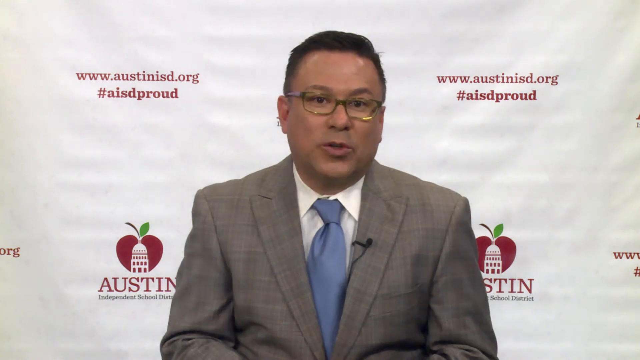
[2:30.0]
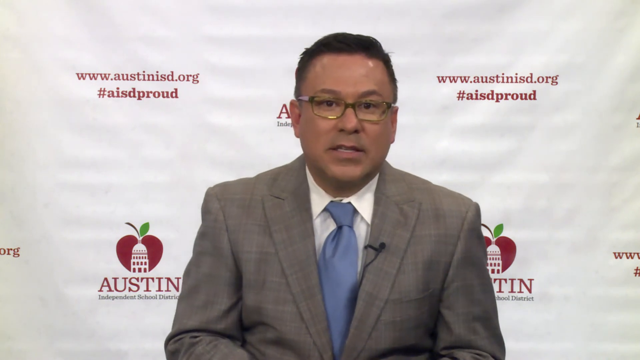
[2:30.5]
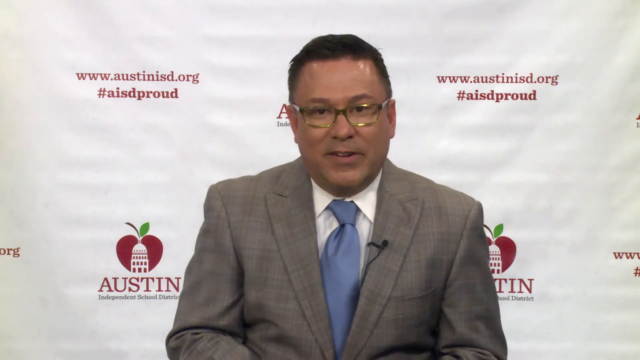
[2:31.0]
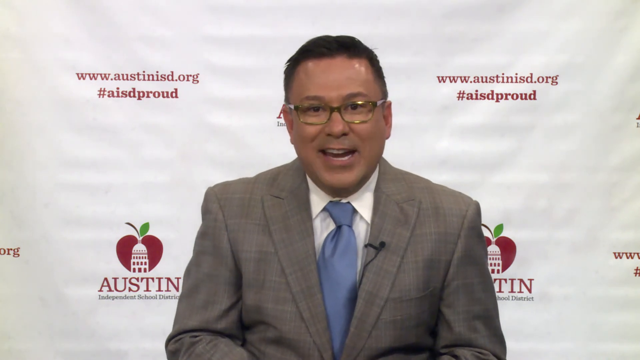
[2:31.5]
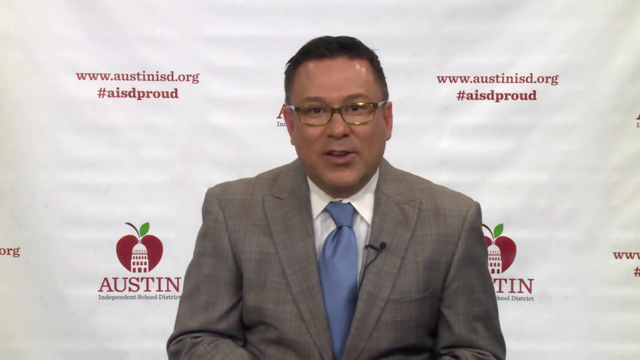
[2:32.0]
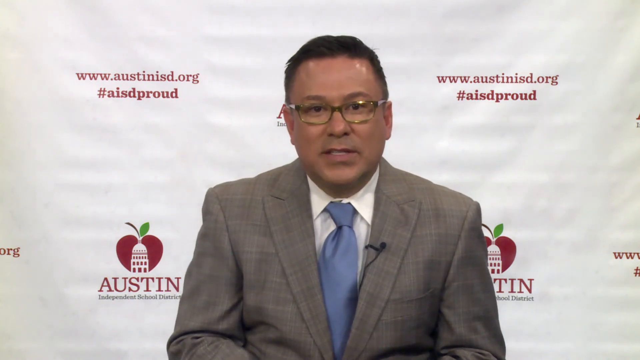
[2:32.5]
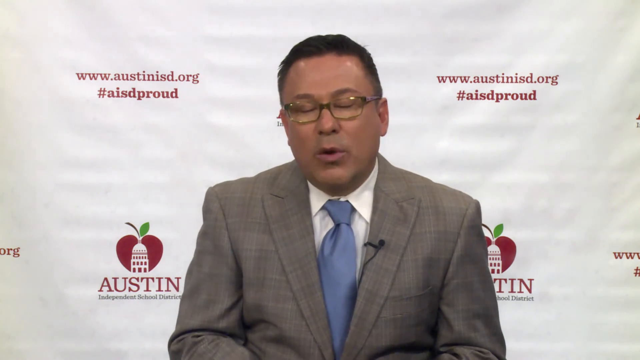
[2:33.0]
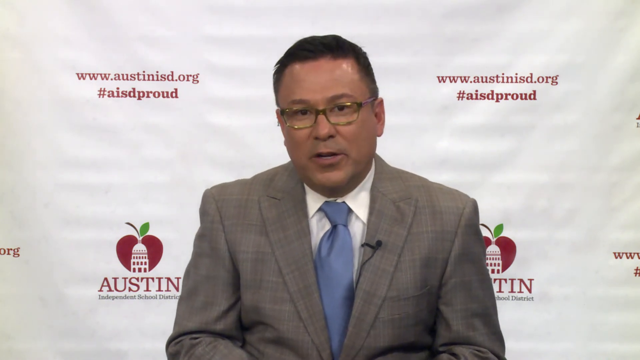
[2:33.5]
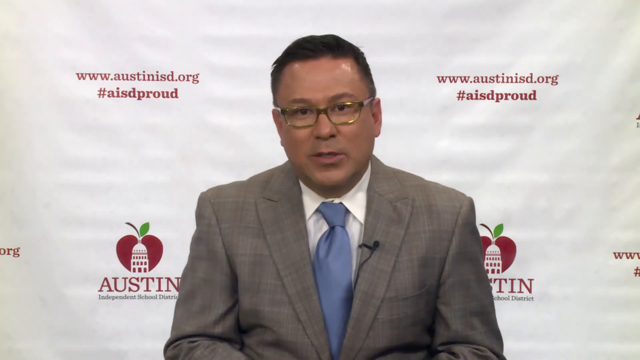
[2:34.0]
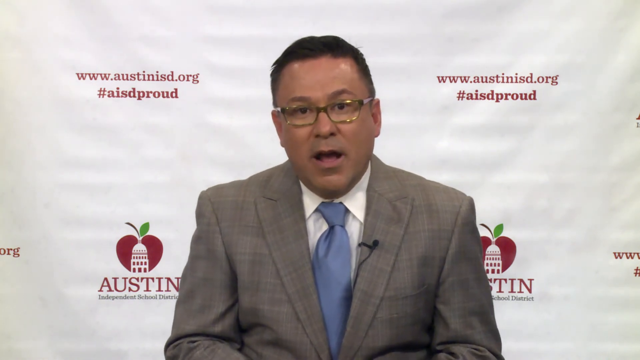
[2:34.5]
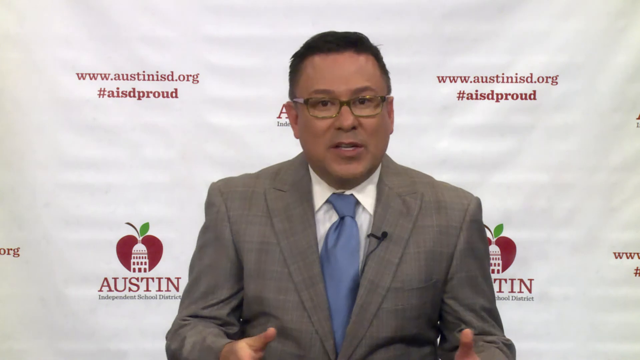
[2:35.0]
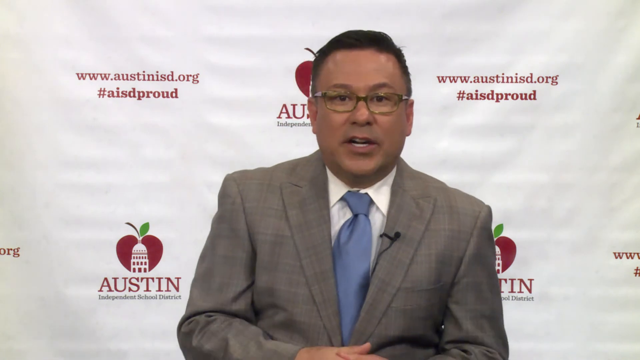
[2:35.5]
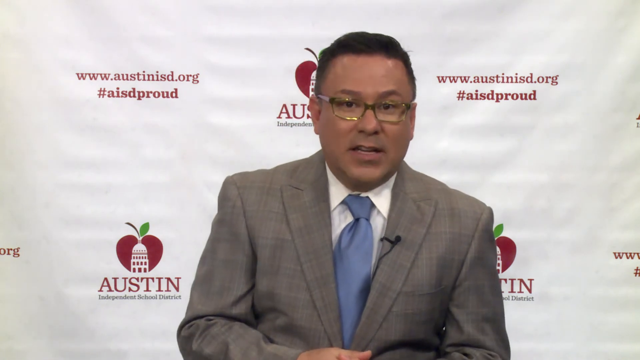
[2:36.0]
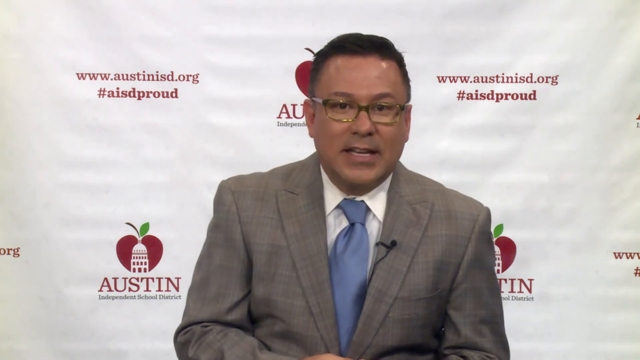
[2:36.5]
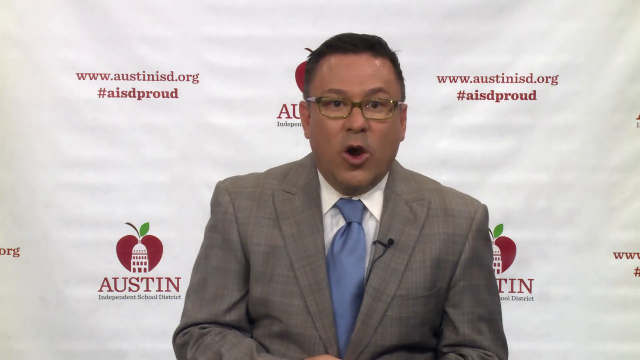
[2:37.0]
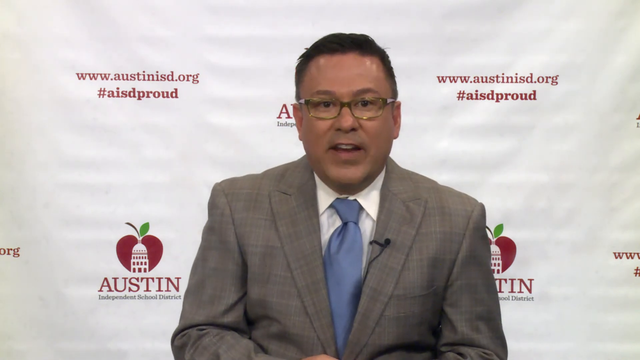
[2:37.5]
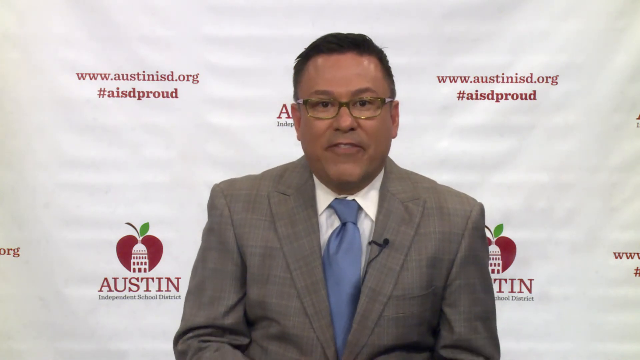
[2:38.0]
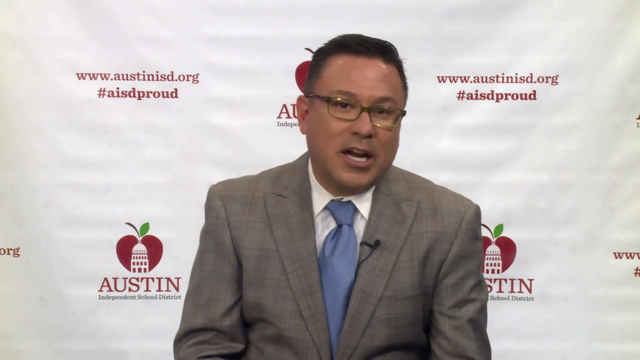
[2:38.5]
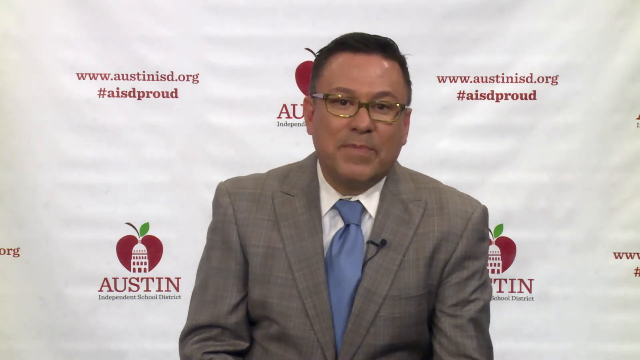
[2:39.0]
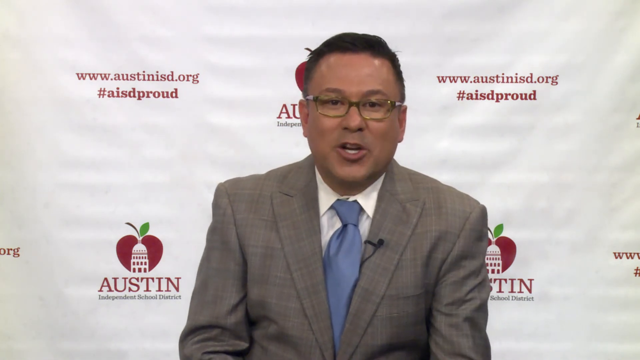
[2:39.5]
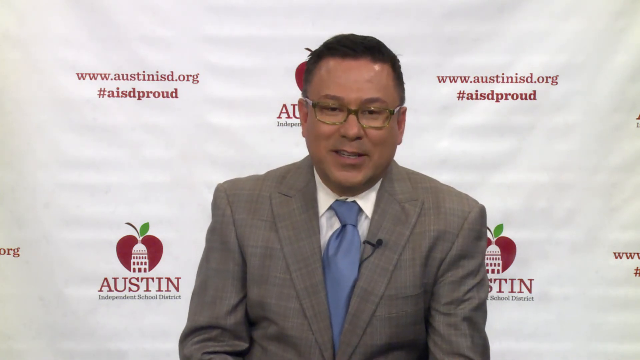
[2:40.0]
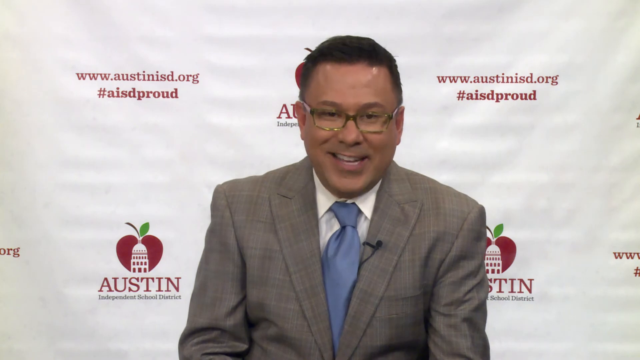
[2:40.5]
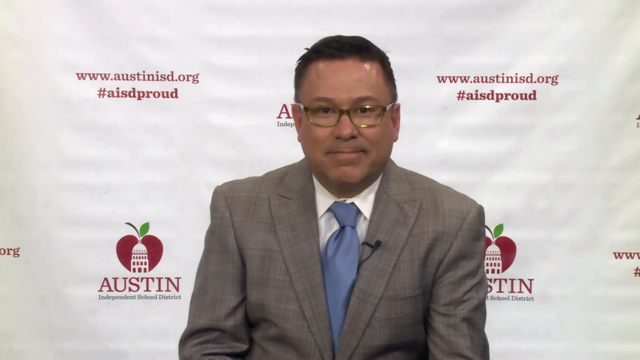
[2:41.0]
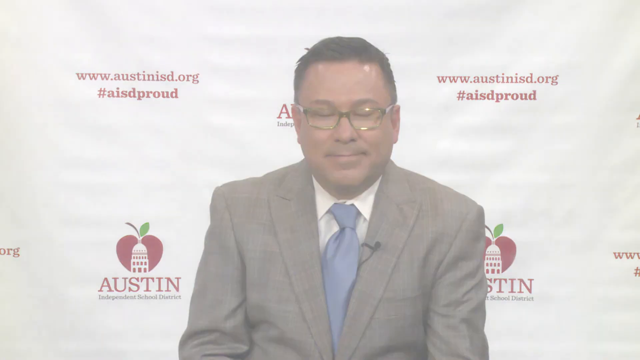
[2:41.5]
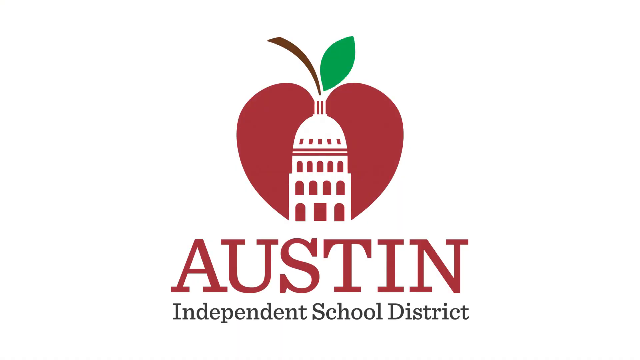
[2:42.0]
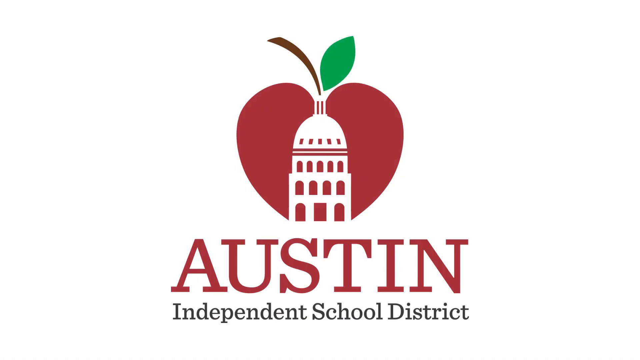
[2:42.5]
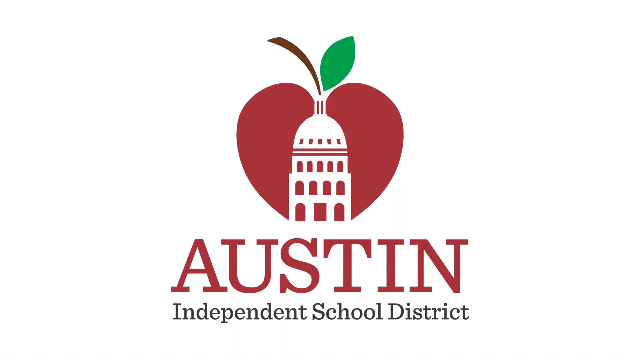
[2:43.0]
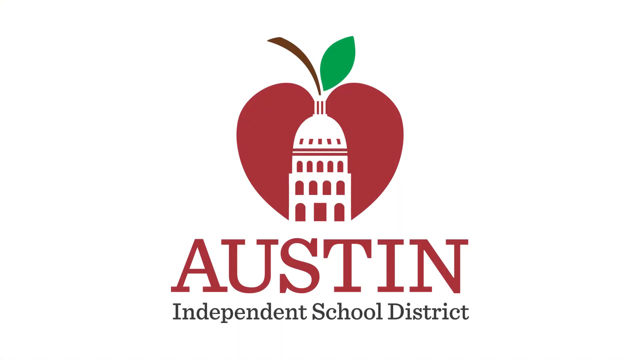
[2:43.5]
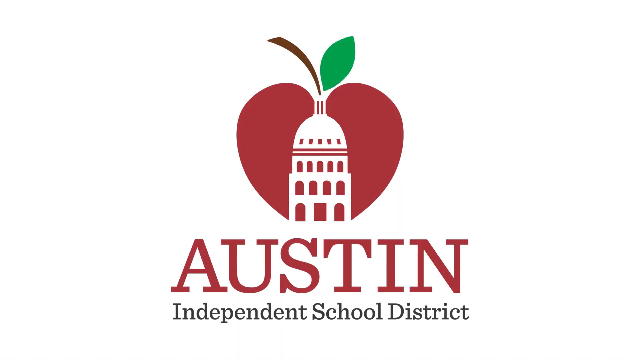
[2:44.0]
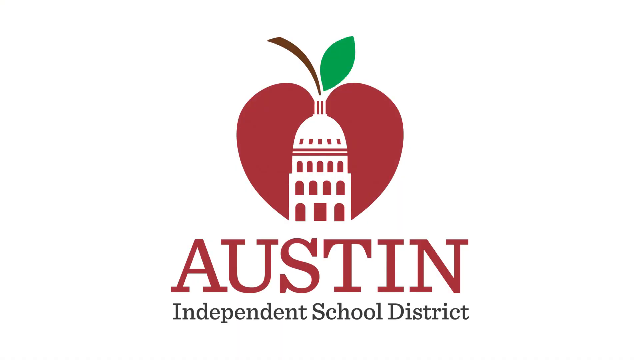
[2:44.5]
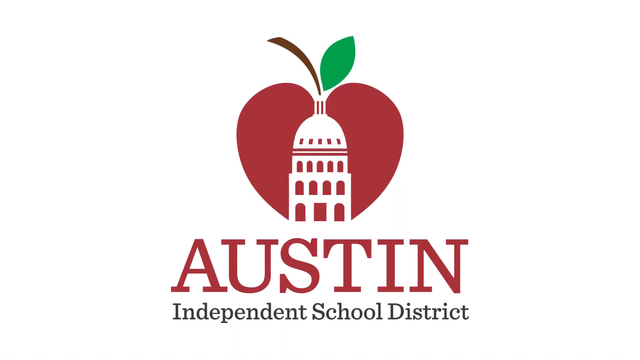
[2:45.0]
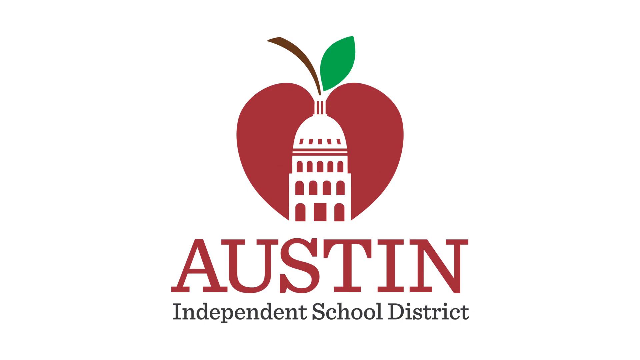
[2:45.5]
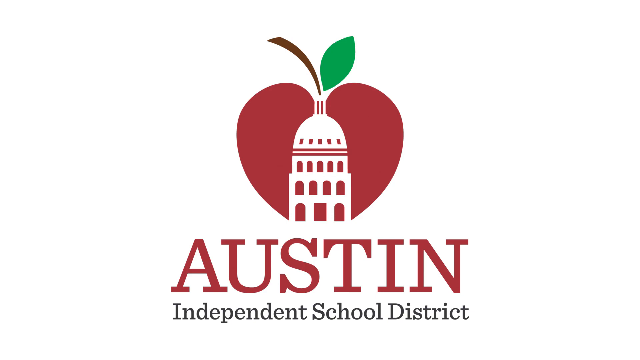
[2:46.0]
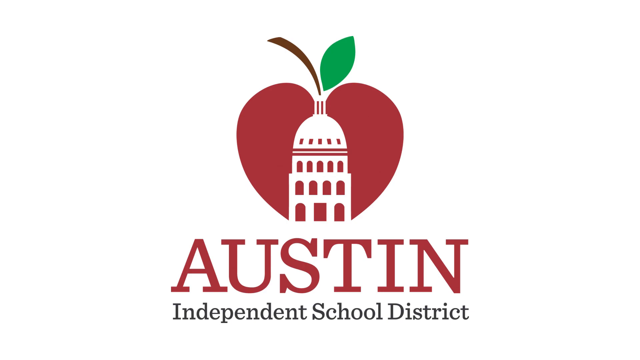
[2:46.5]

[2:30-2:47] A man talks in front of the camera; he is apparently a superintendent or something similar. He wears something like a gray jacket or blazer, a white shirt and a blue tie, with a microphone attached to the inside of his blazer, and glasses. The white background behind him reads "Austin Independent School District, AISD." A small wedding band is visible on one of his hands. Right before the end, a logo of an apple with something like a capitol inside it appears, with the text "Austin Independent School District."